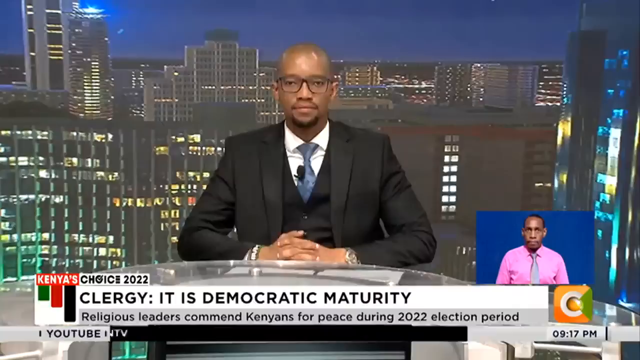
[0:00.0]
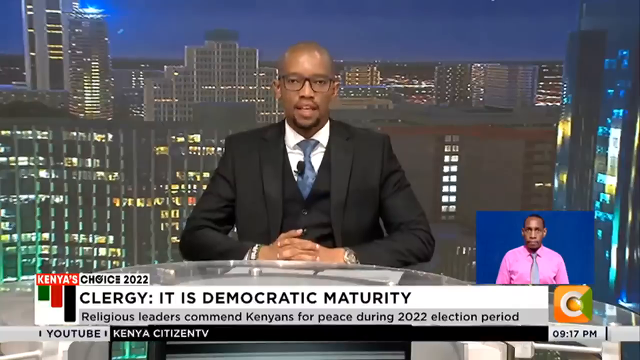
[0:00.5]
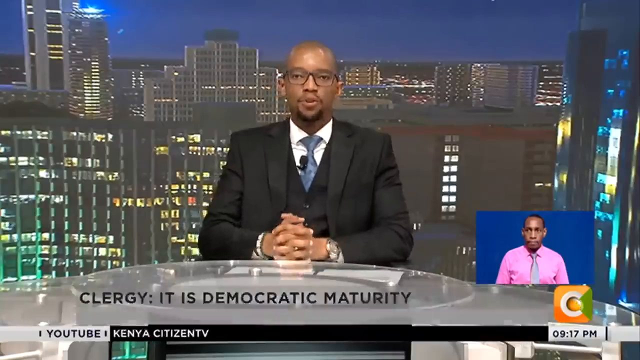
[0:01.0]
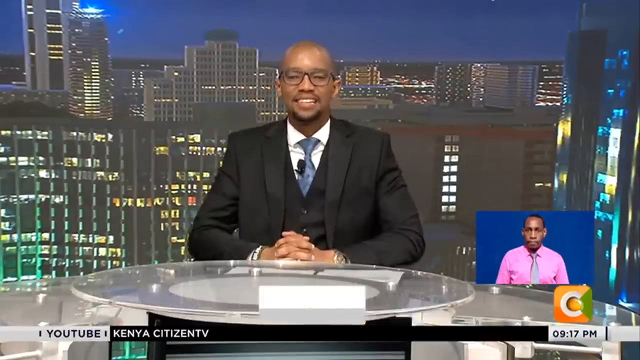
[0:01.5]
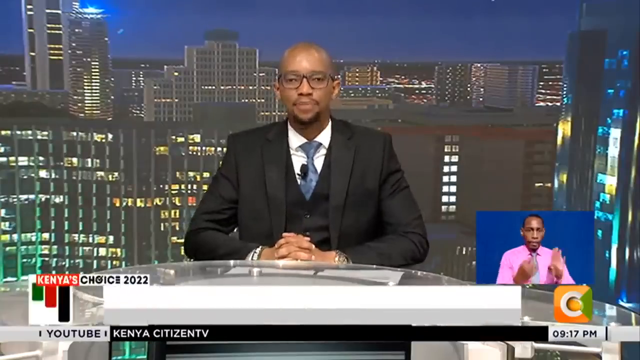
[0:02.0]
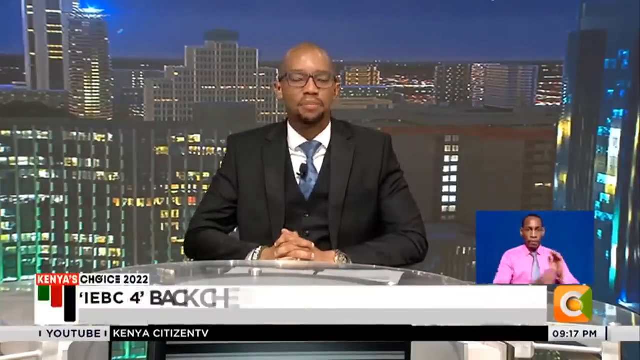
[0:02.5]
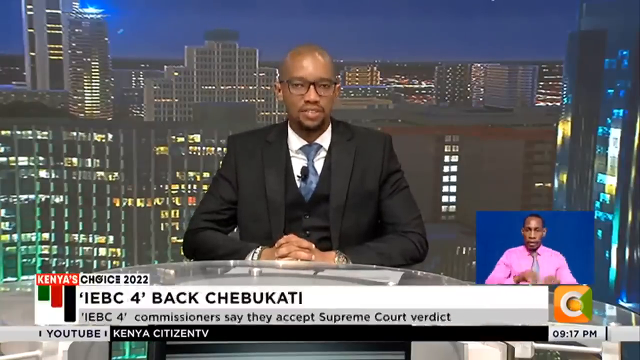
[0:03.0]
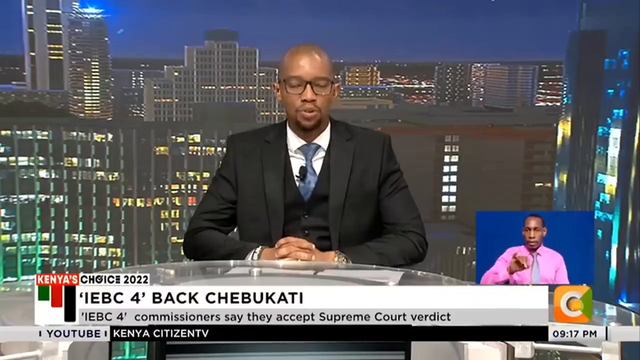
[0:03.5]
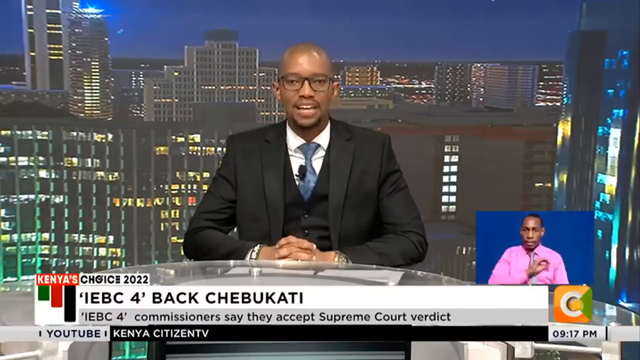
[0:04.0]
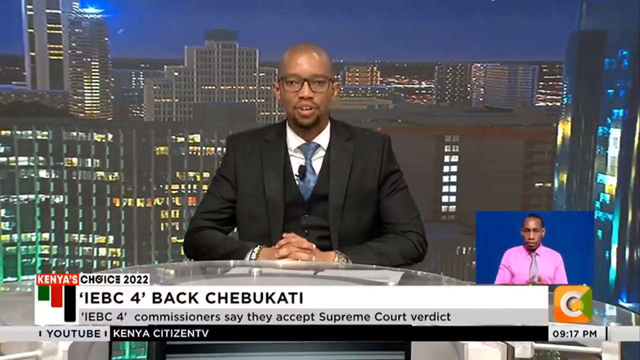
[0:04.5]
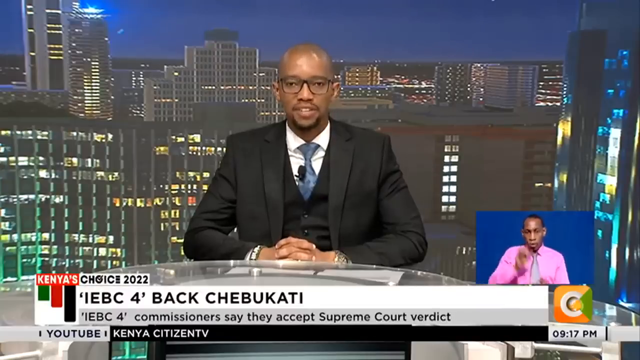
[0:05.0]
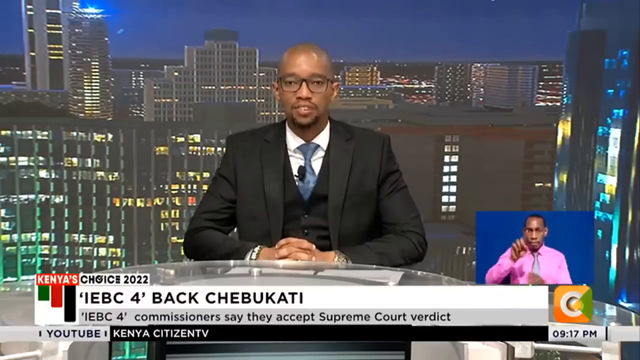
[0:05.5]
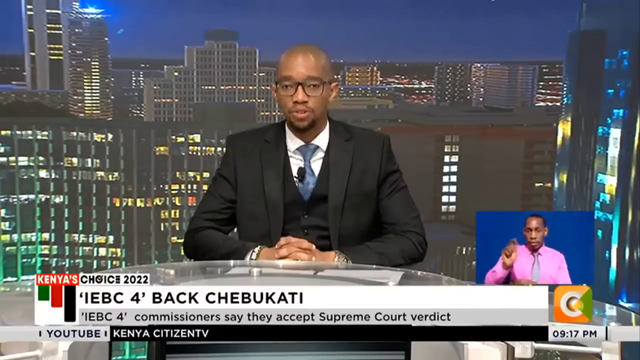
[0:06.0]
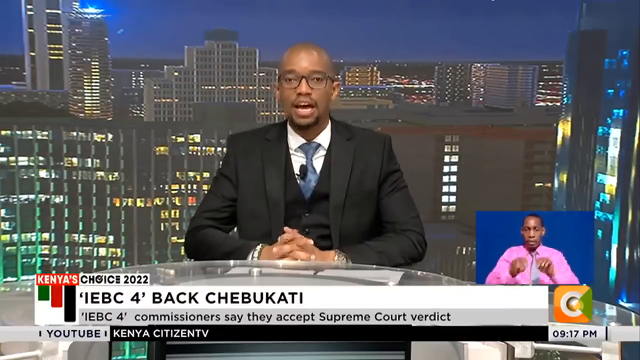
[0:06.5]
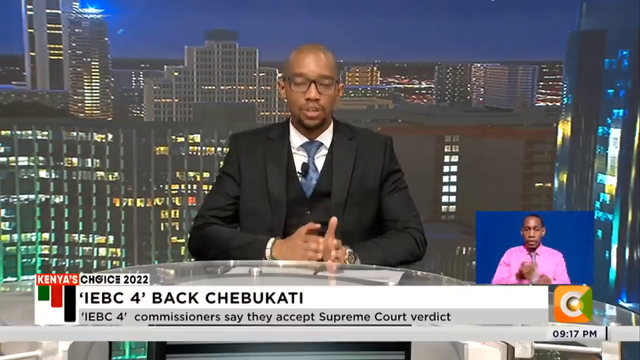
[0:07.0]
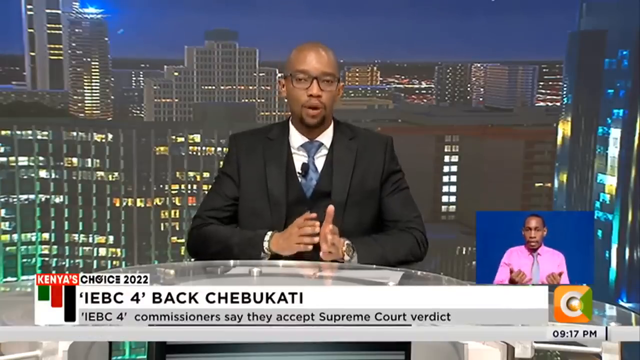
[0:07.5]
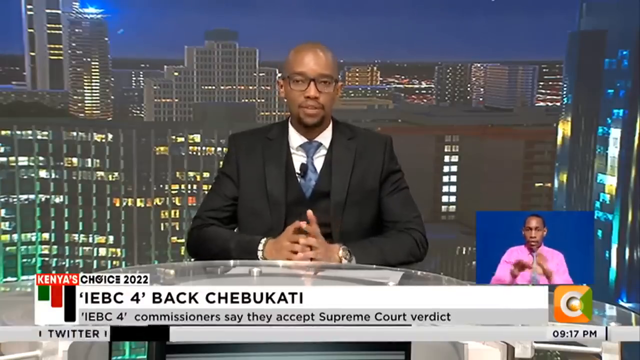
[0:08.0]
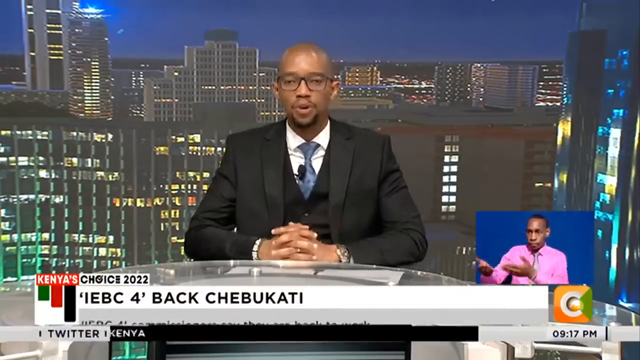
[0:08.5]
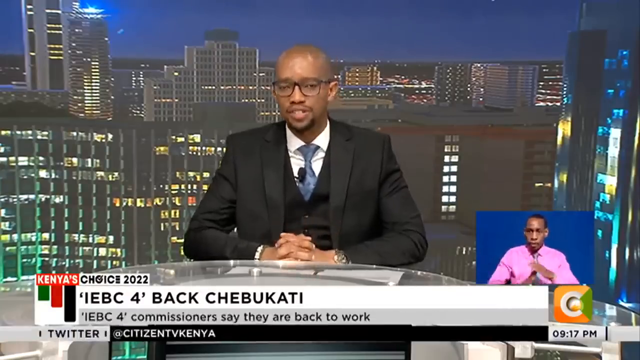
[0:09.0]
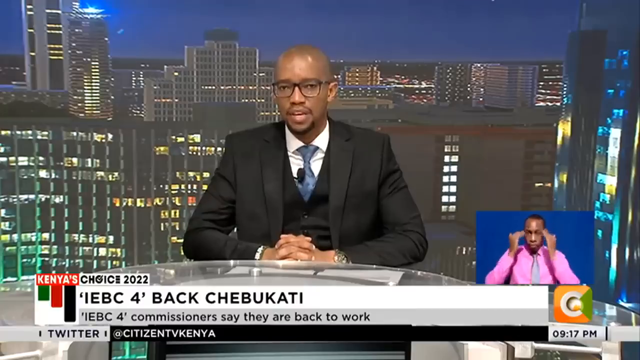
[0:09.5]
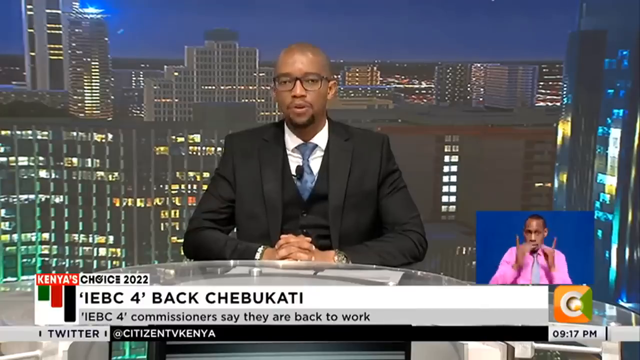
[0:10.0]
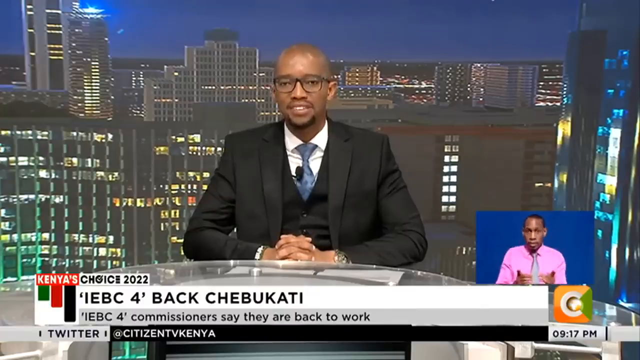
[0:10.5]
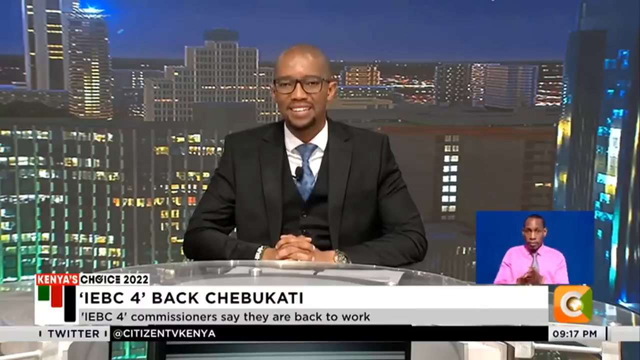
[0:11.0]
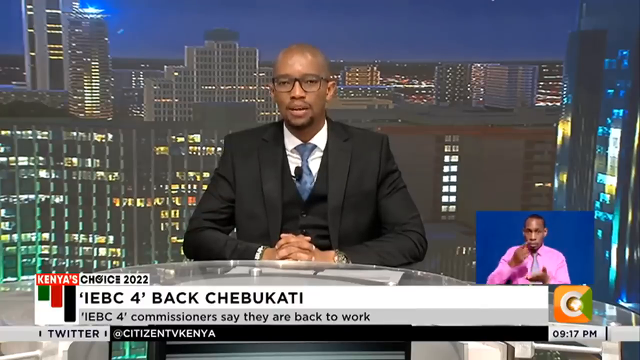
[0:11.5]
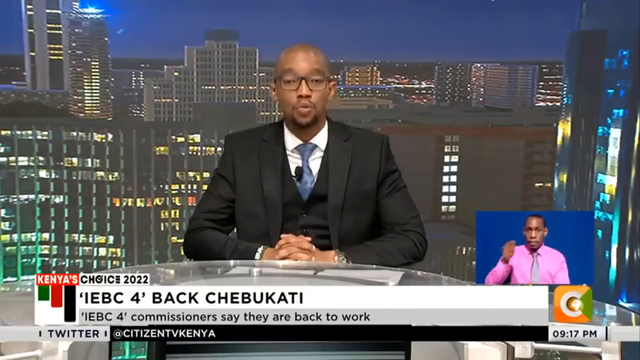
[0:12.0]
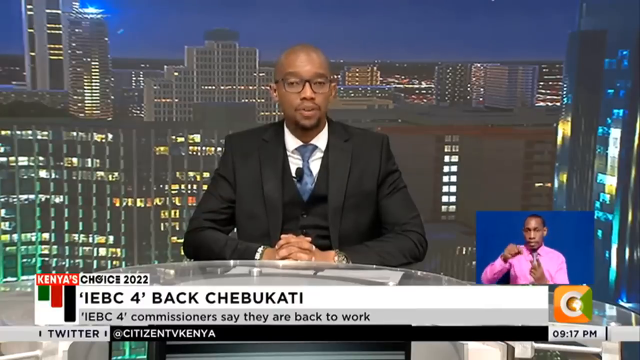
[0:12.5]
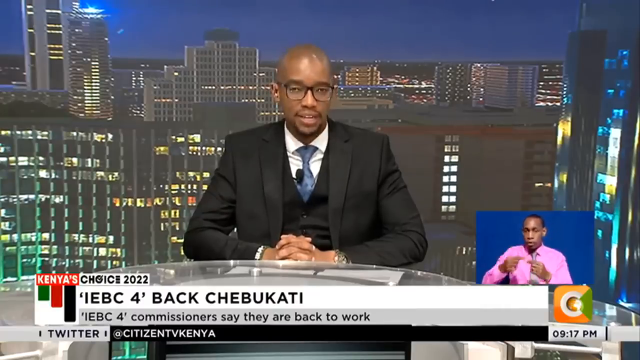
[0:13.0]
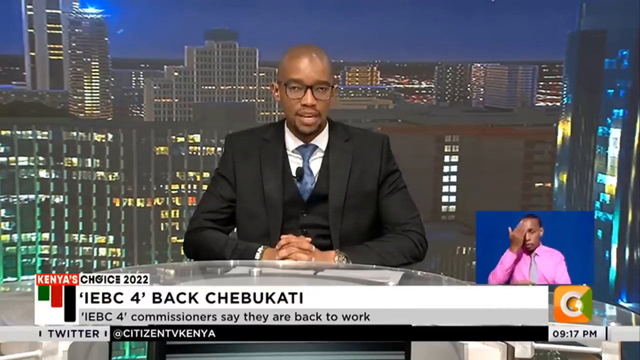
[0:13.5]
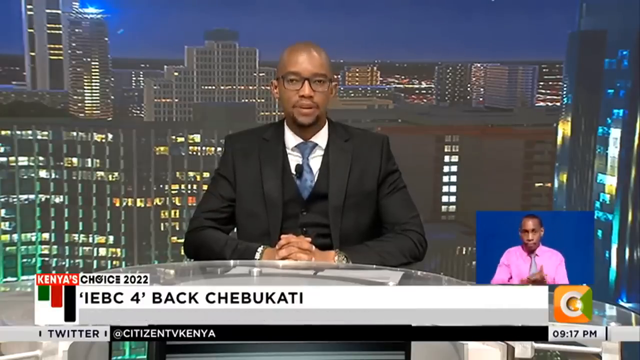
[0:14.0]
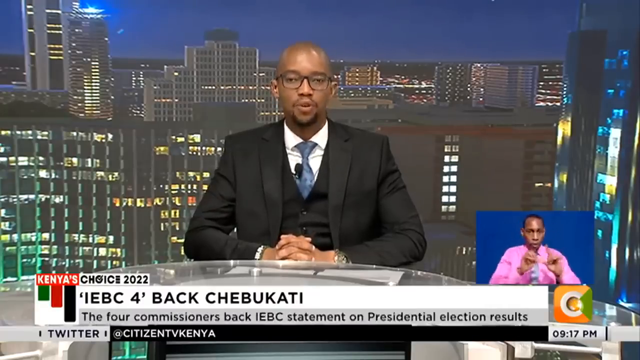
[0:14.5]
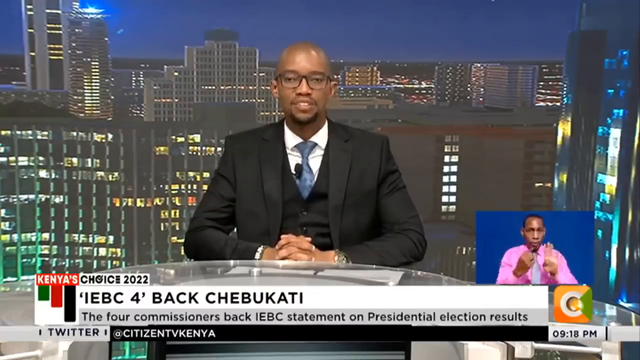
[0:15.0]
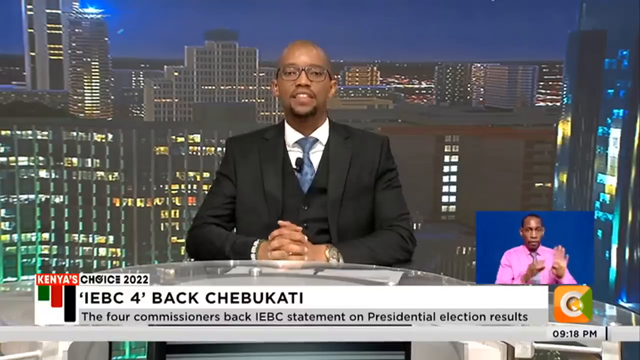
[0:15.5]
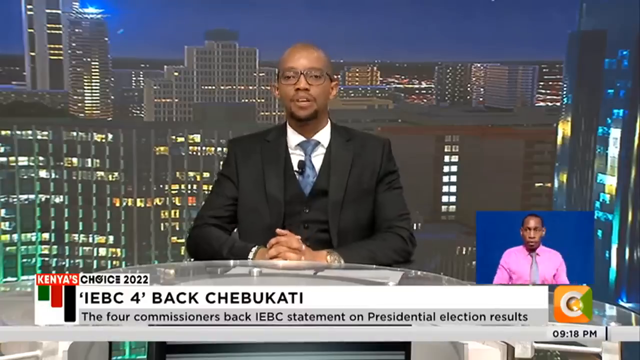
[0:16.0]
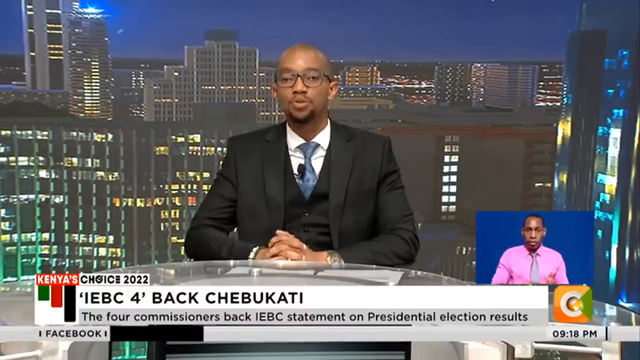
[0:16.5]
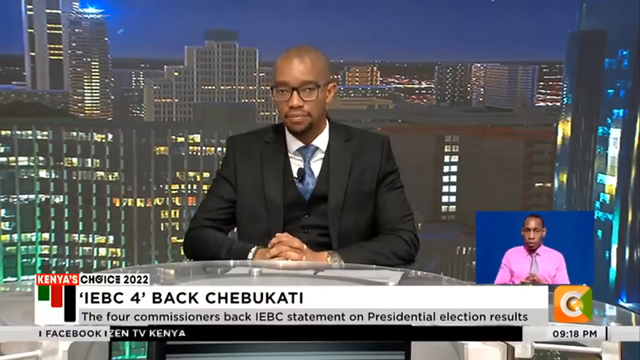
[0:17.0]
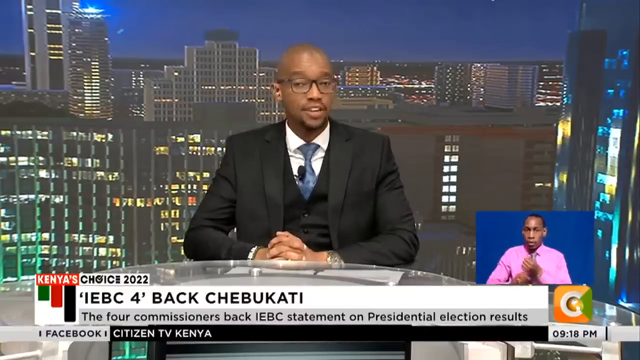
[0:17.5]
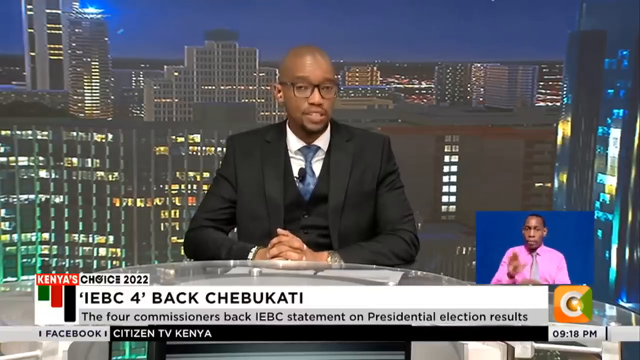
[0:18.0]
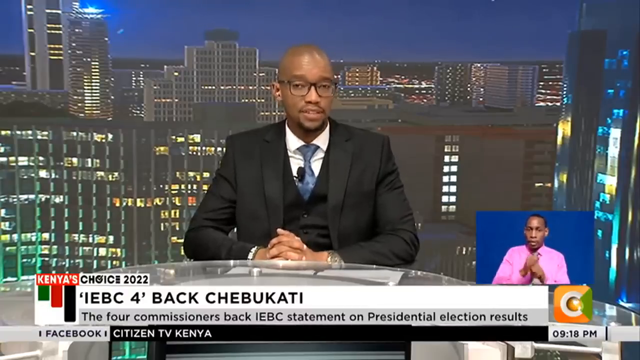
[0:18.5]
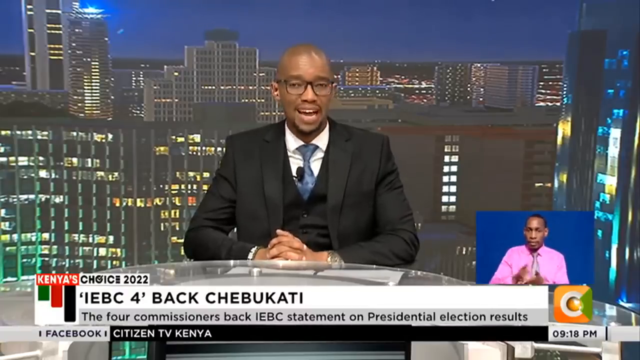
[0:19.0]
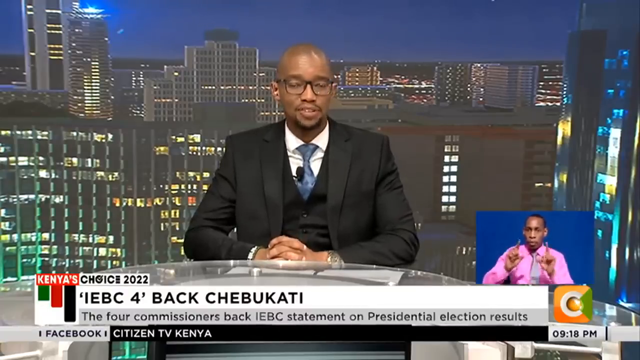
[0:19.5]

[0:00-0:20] What appears to be a news report is shown. At the bottom left is "Kenya," along with green, red and black colors, possibly Kenya's flag colors. The text reads "Kenya's choice 2022," apparently referring to an election year. The main title of the report seems to be "IEBC 4 Back Chibukati," with English text right below it reading "commissioners say they accept supreme court verdict"; the text then scrolls up to read "commissioners say they are back to work." The main presenter appears to be a man with black glasses, a very dark black vest, a white undershirt and an ice blue tie. He looks directly at the viewer with his hands together, looking very stoic, and speaks to the viewer.